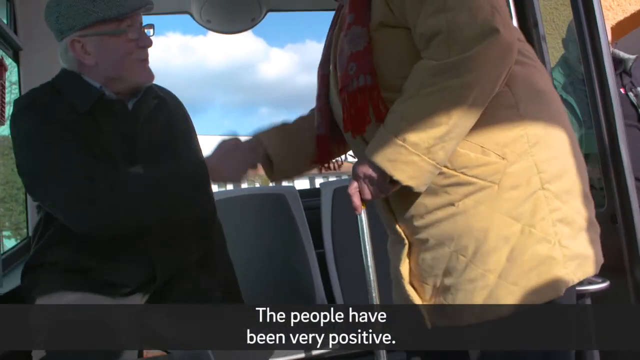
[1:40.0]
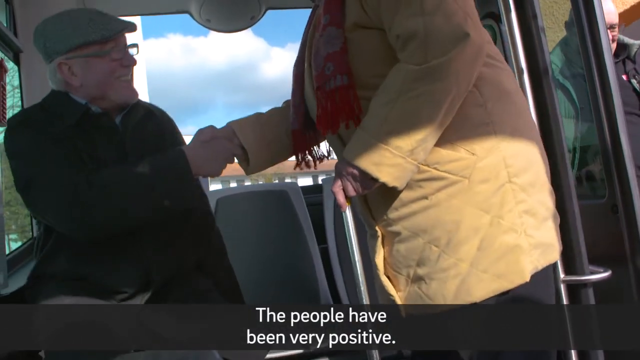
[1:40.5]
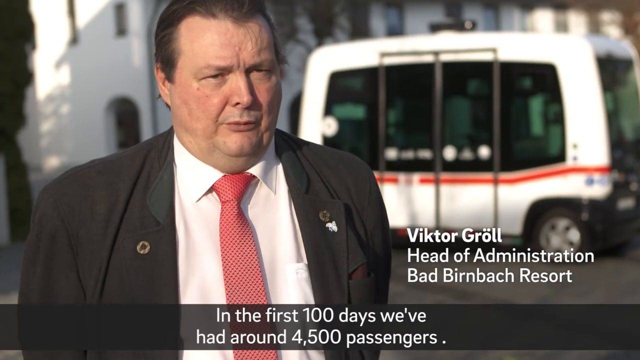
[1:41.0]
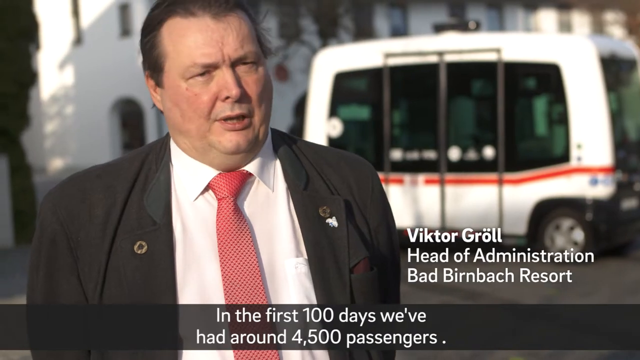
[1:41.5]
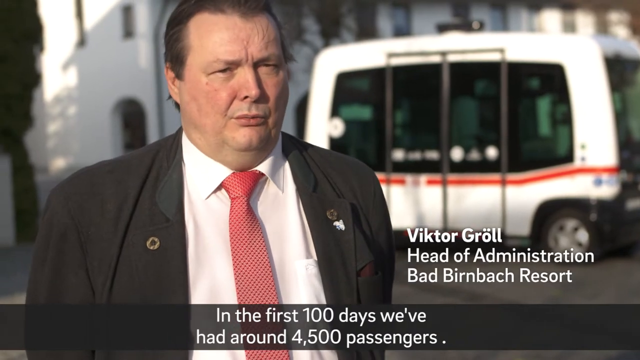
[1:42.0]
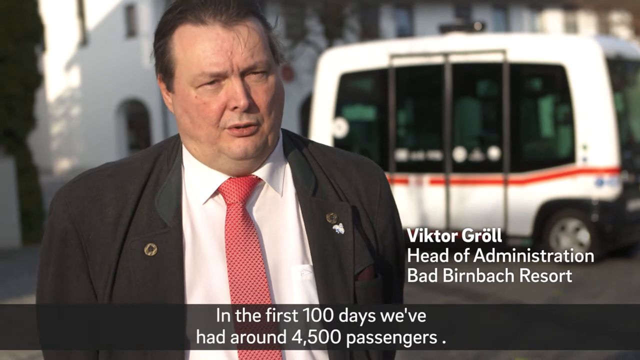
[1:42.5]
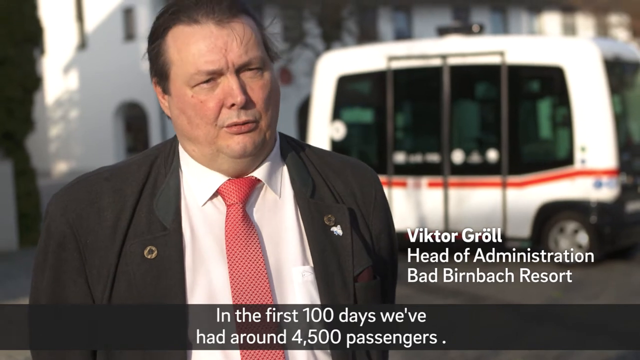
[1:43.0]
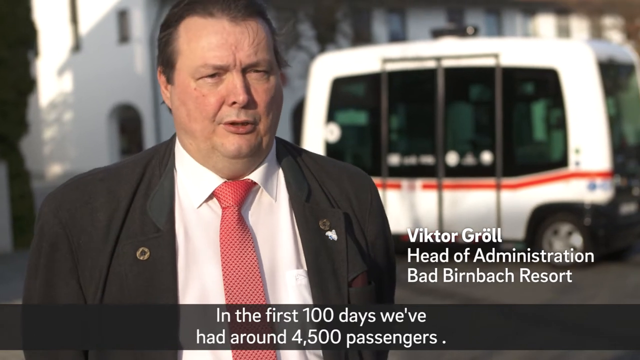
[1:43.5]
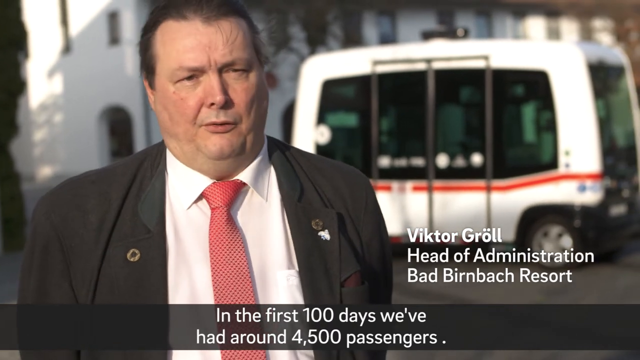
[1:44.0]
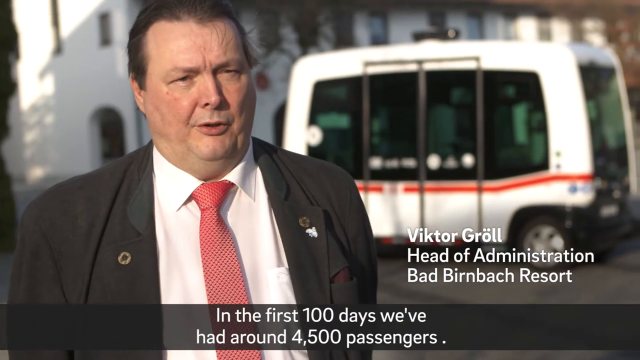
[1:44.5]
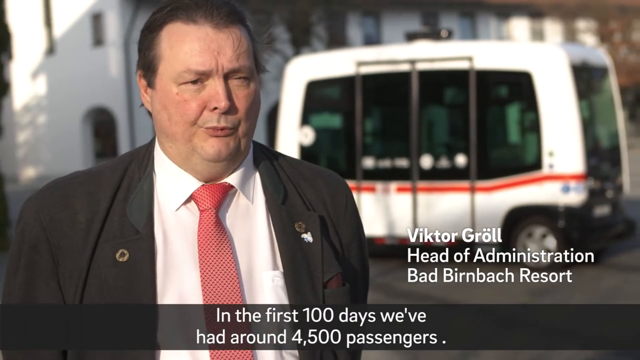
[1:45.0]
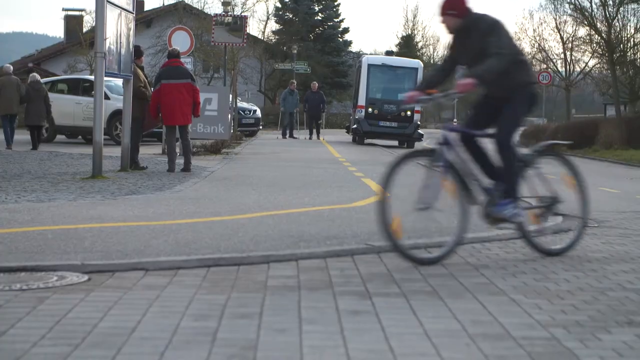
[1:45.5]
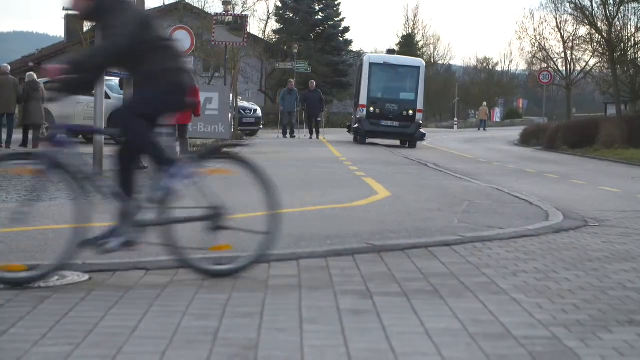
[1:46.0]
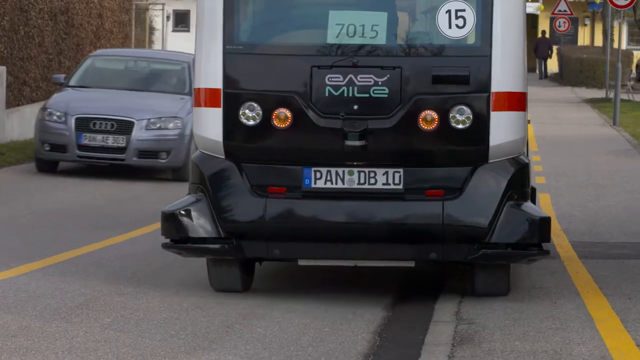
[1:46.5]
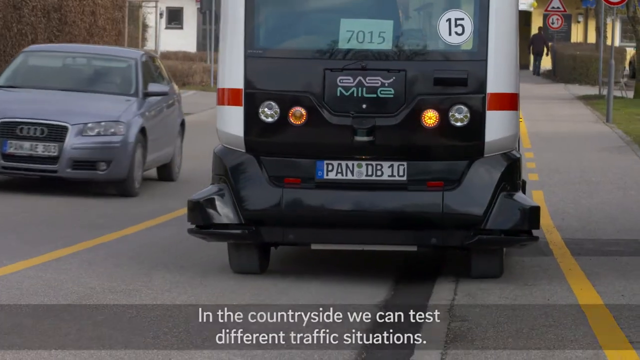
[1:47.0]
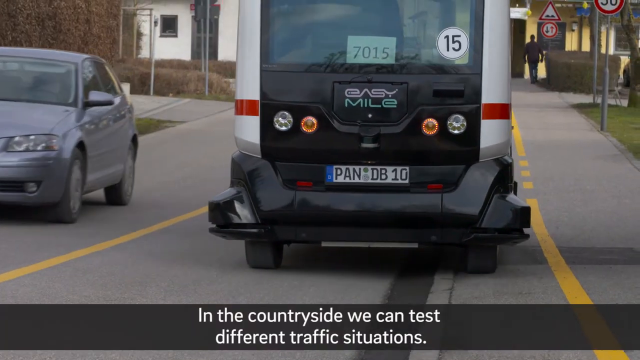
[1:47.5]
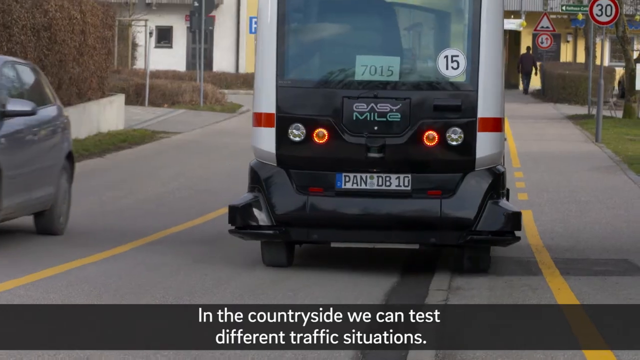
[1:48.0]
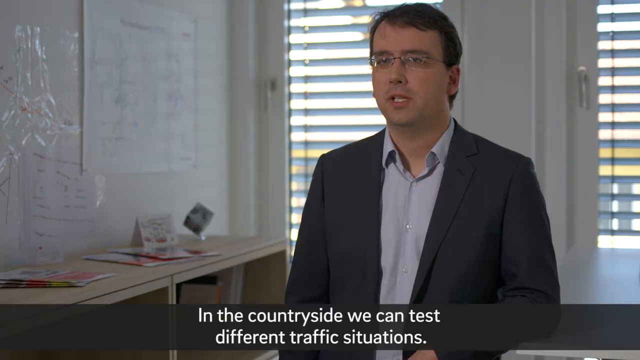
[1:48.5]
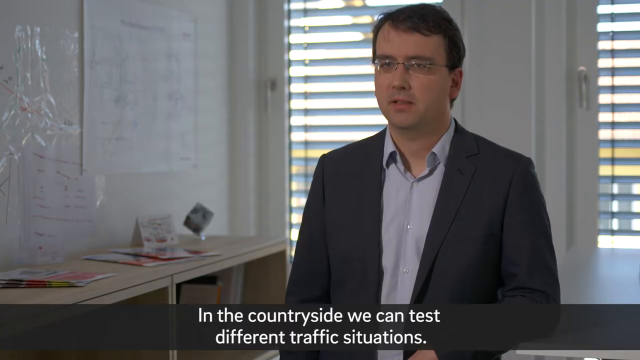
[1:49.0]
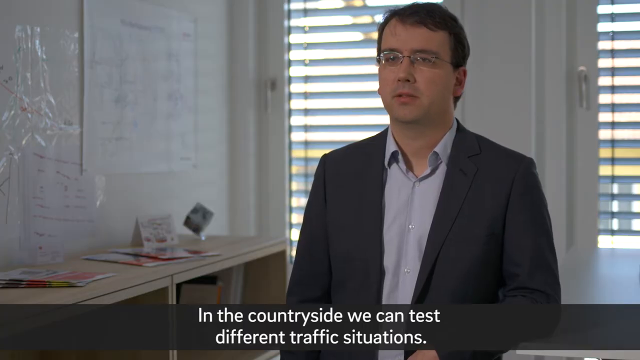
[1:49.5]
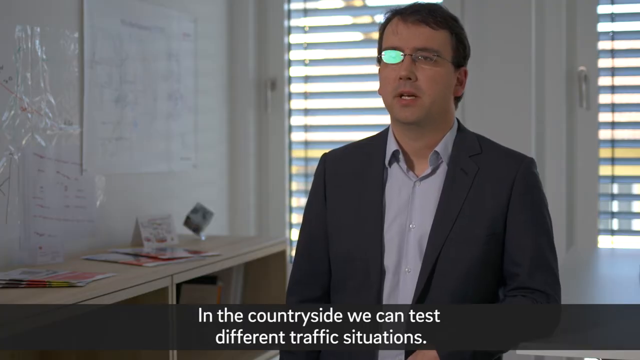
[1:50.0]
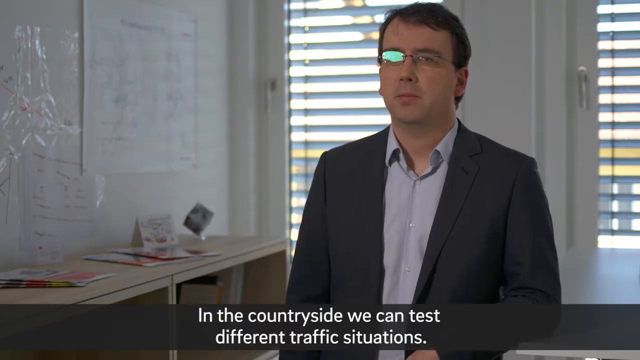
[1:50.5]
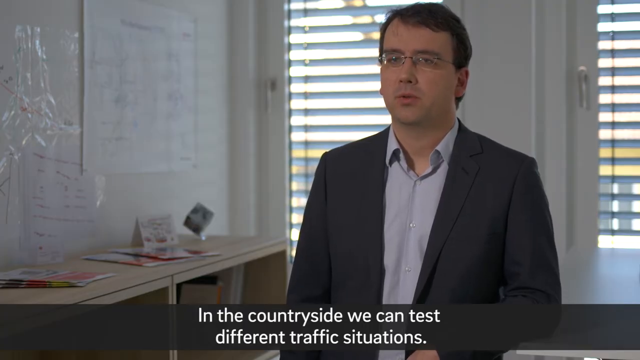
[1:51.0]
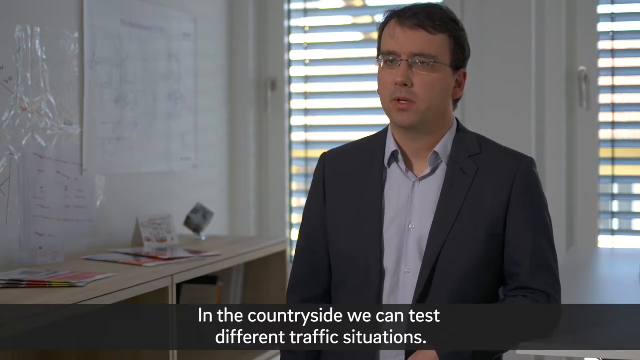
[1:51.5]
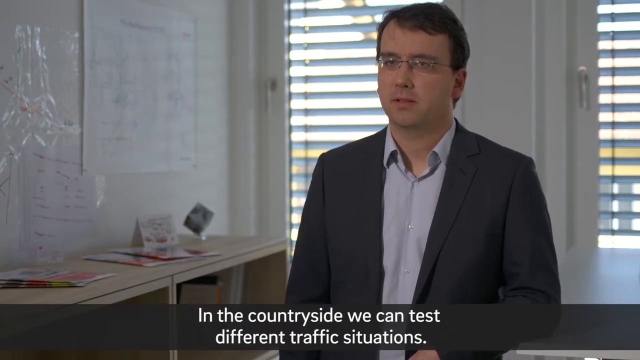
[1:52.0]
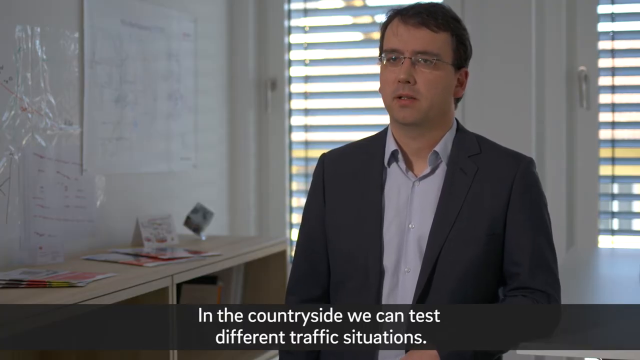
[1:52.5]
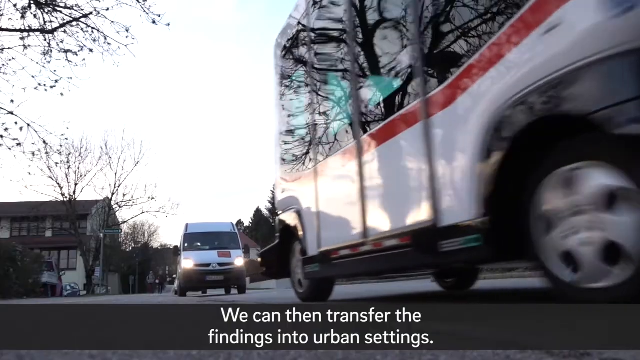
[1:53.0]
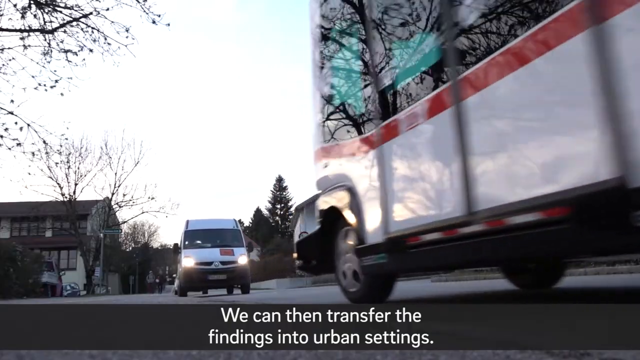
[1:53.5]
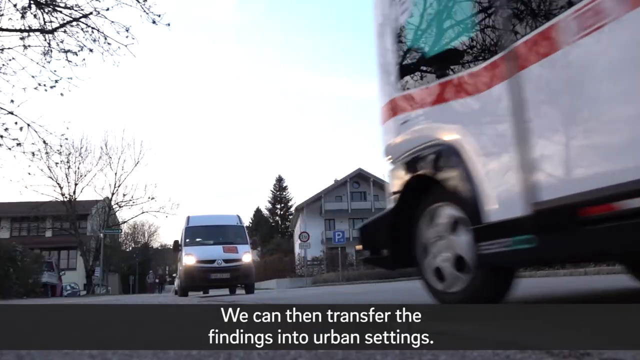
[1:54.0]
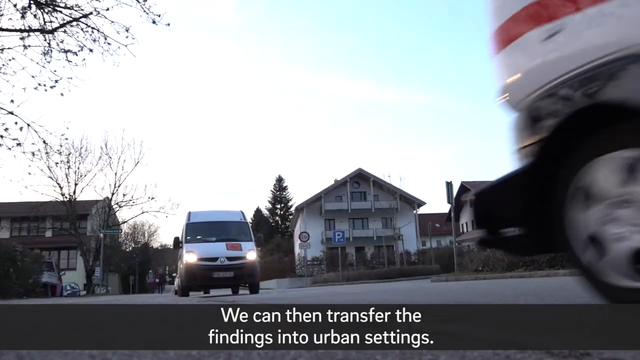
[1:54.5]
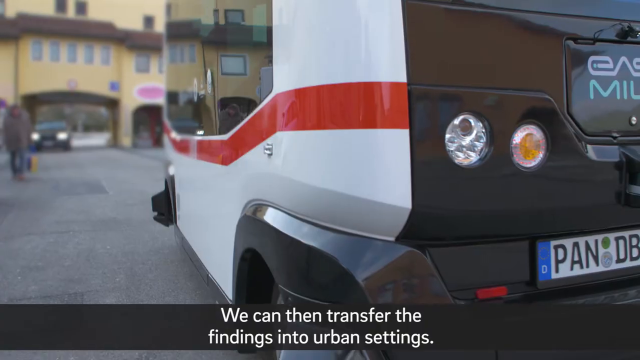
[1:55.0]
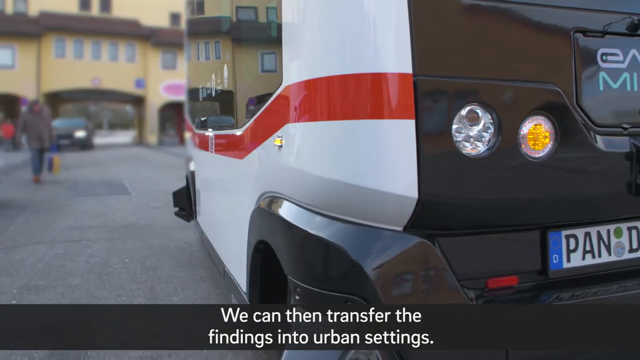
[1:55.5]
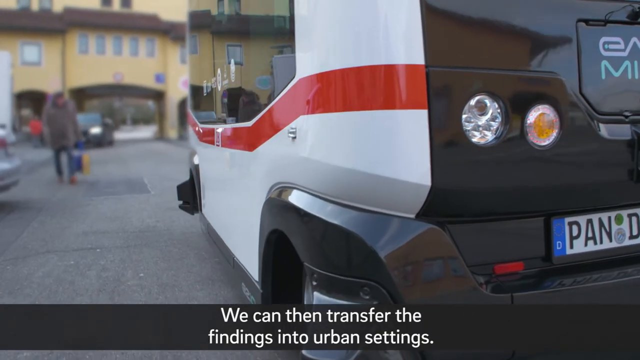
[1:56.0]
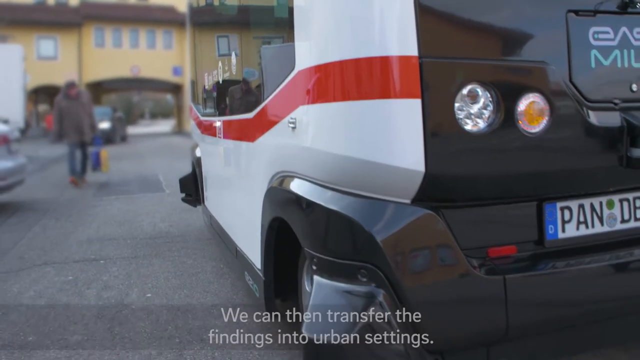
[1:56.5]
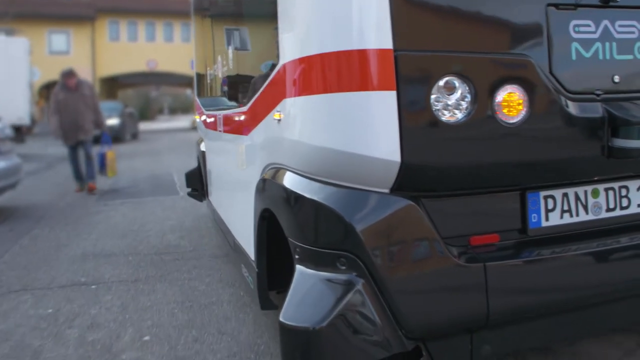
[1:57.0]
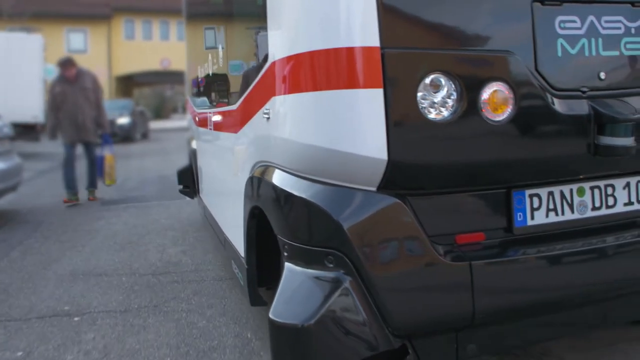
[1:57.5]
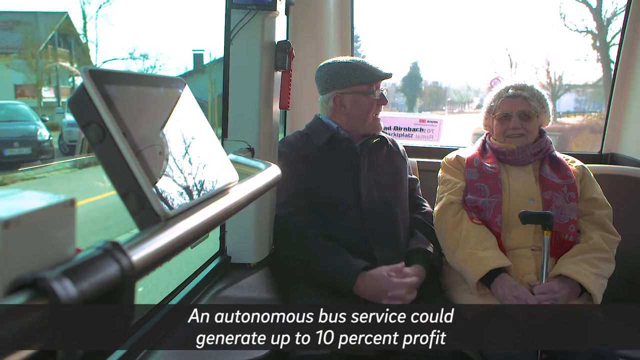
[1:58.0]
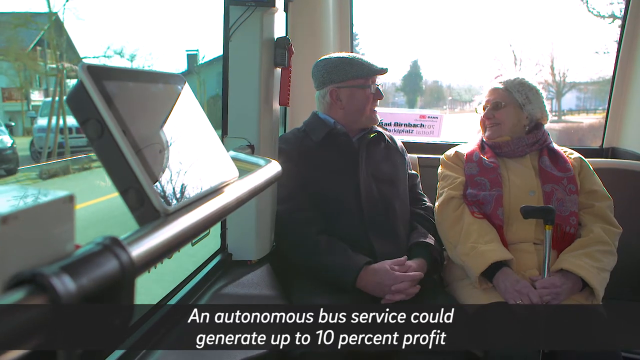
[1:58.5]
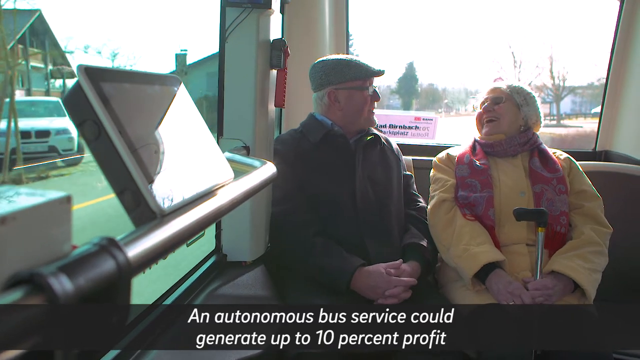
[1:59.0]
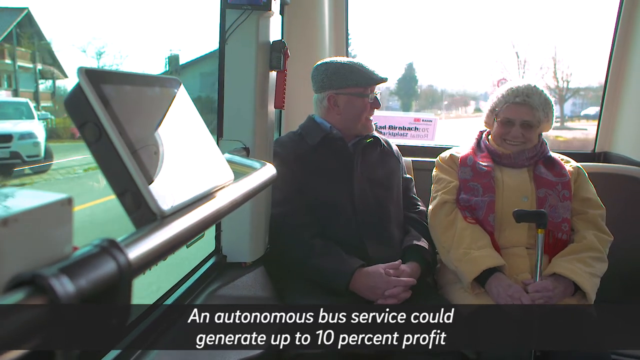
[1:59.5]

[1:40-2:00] The woman seen earlier appears again in her yellow puffy jacket and mostly red scarf; her hair is mostly white, though it looks like a darker color such as gray. She shakes hands, using her right hand to shake the right hand of a man sitting on the bus, who wears glasses and a gray cap and is smiling. Text reads "the people have been really positive" and "in the first 100 days we've had around 4,500 passengers." Further text reads "in the countryside we can test different traffic situations" as the buses slowly go by, then "we can then transfer the findings" and that the bus service could generate up to 10% profit.